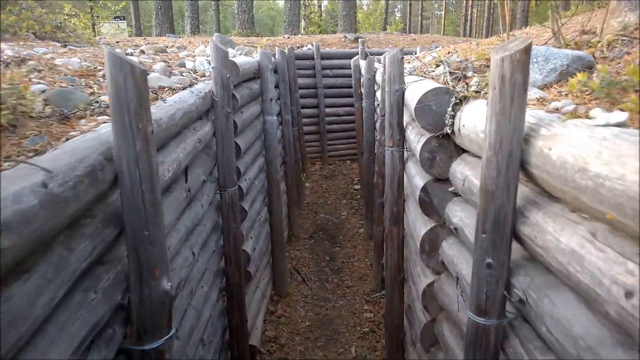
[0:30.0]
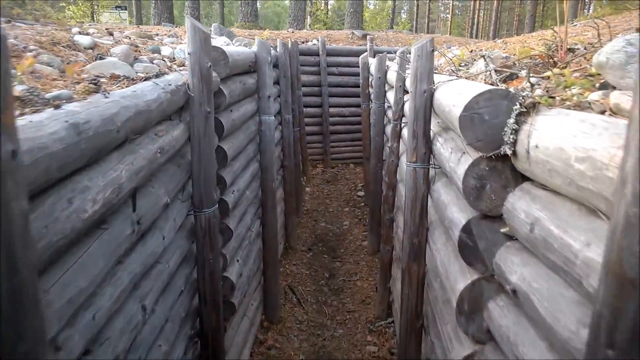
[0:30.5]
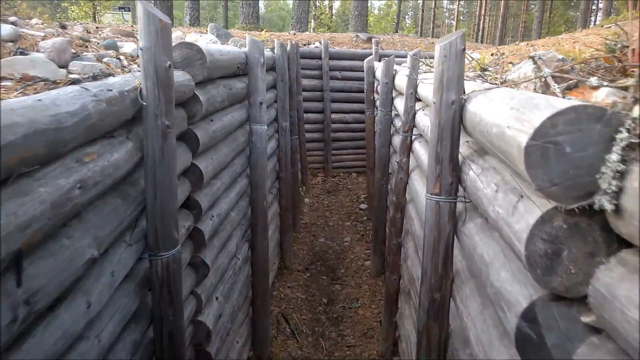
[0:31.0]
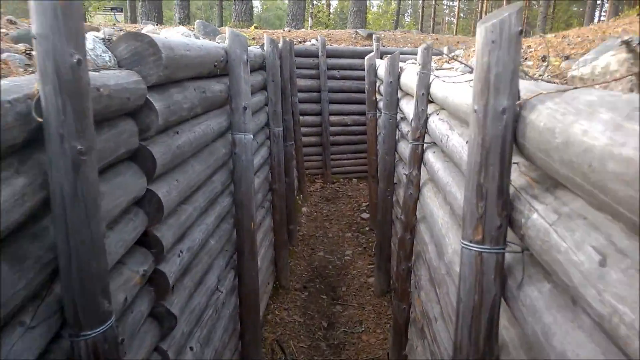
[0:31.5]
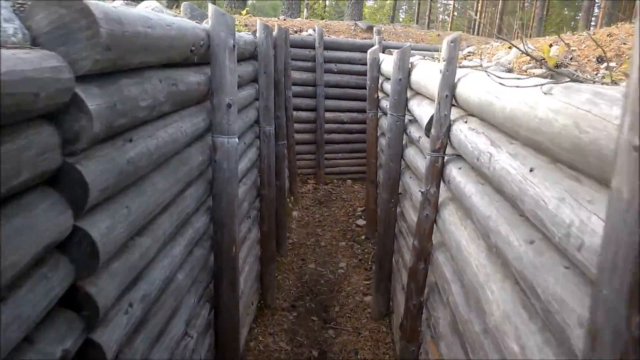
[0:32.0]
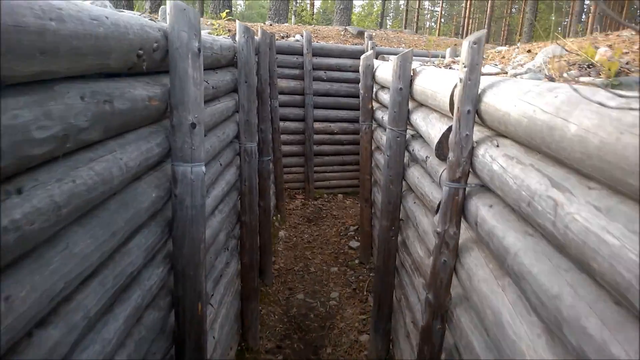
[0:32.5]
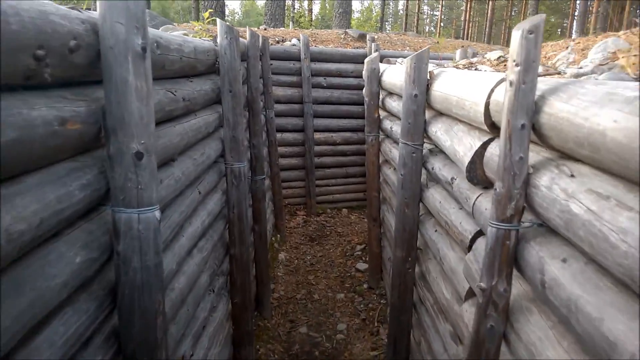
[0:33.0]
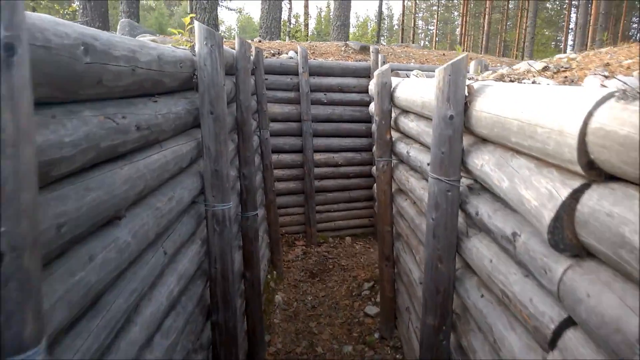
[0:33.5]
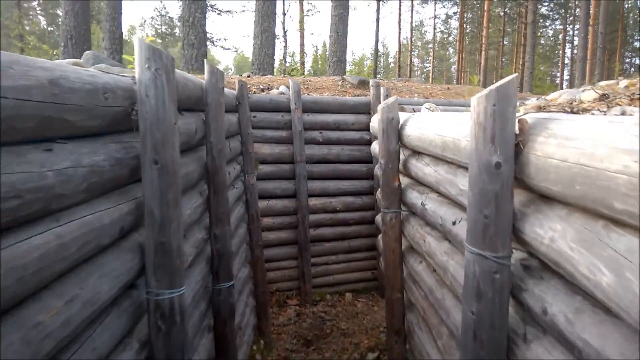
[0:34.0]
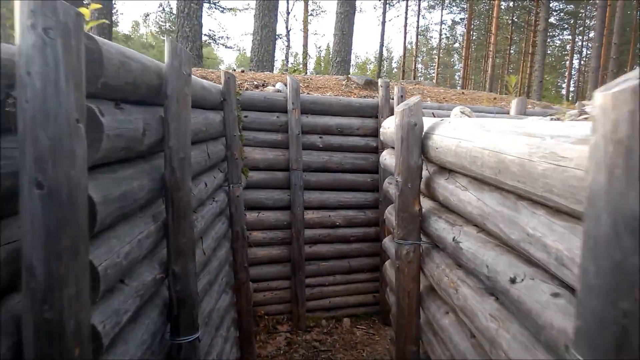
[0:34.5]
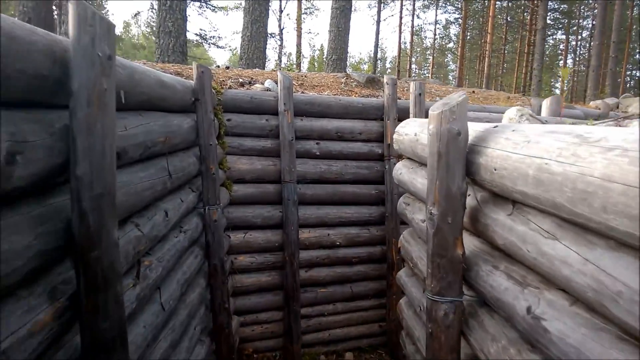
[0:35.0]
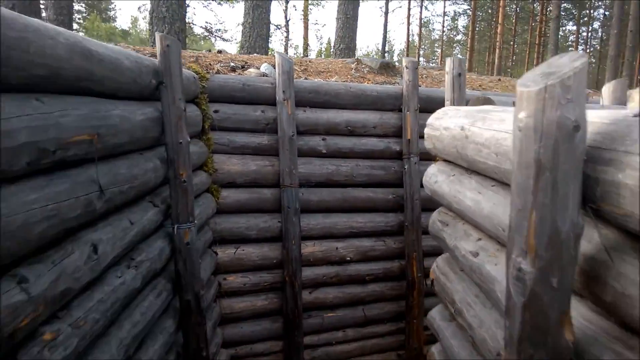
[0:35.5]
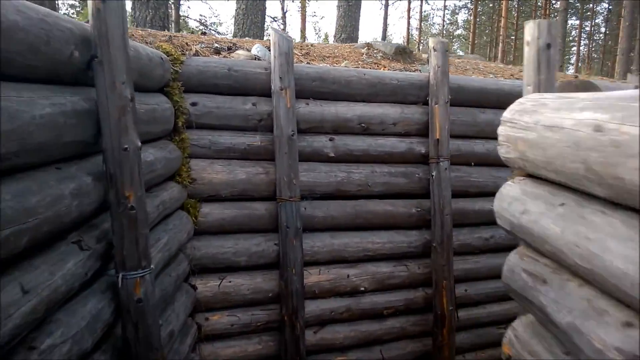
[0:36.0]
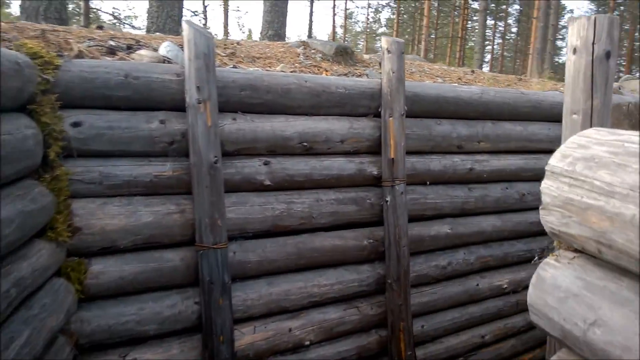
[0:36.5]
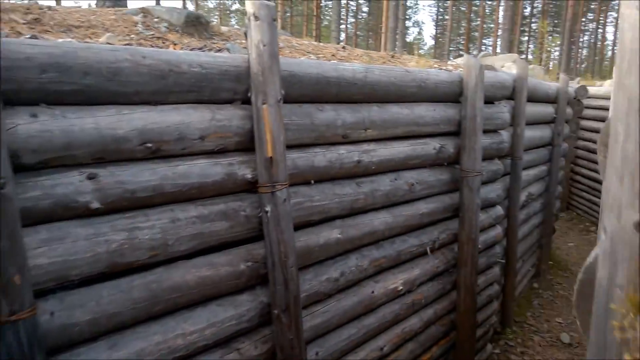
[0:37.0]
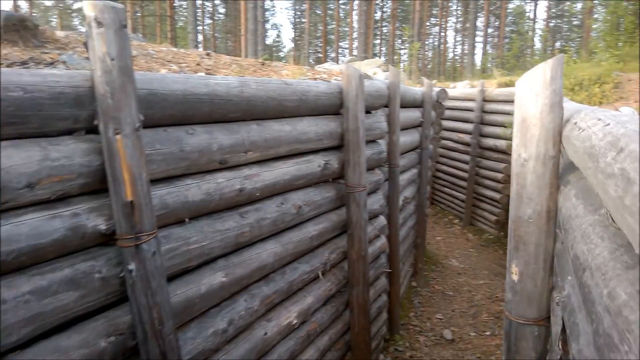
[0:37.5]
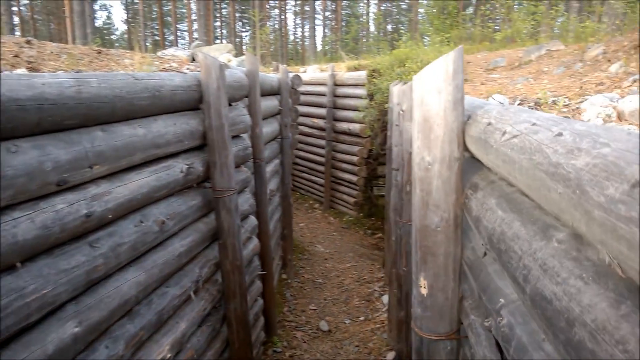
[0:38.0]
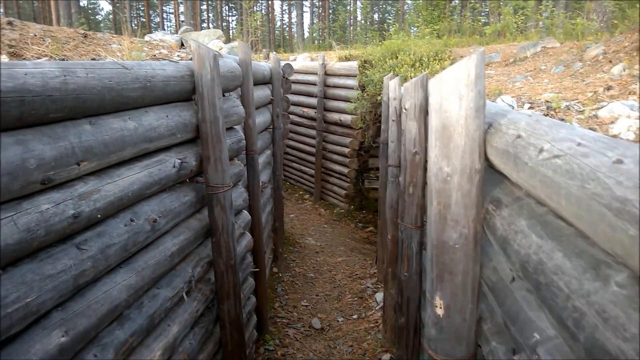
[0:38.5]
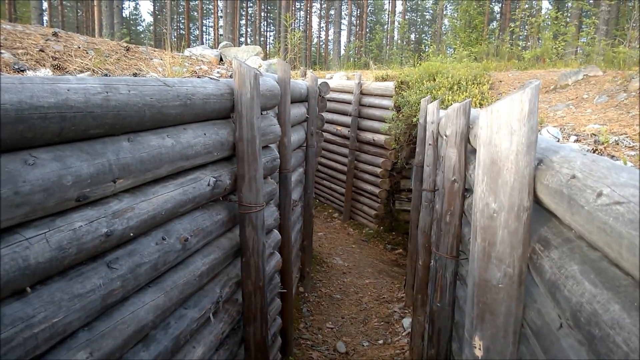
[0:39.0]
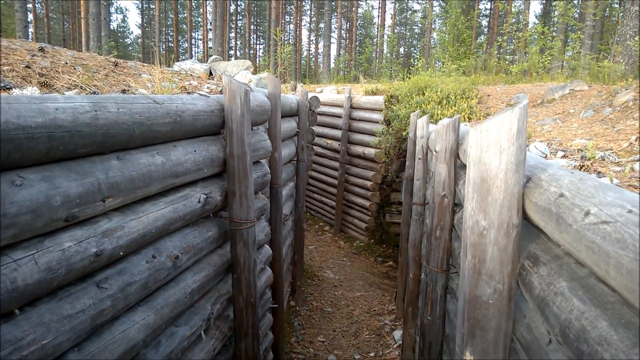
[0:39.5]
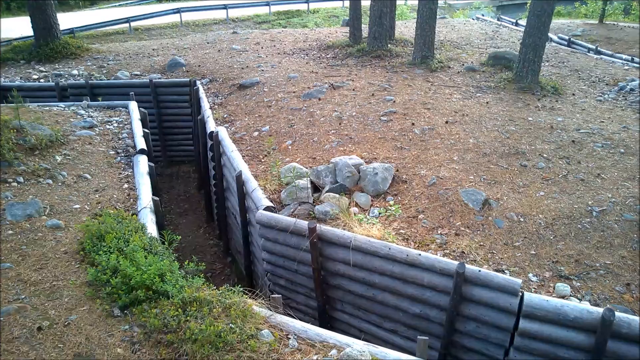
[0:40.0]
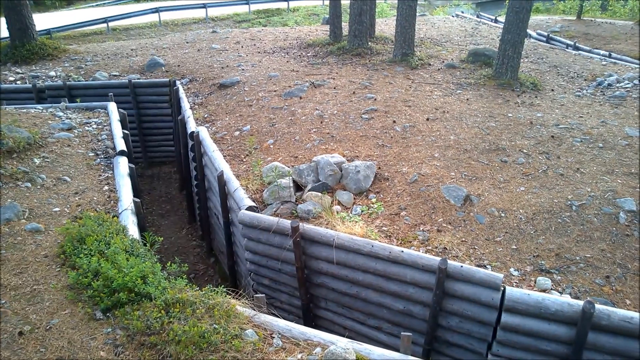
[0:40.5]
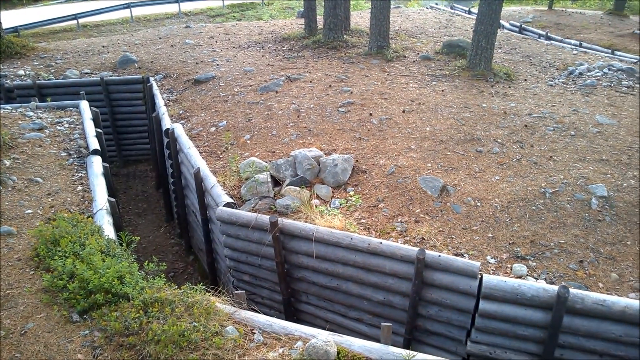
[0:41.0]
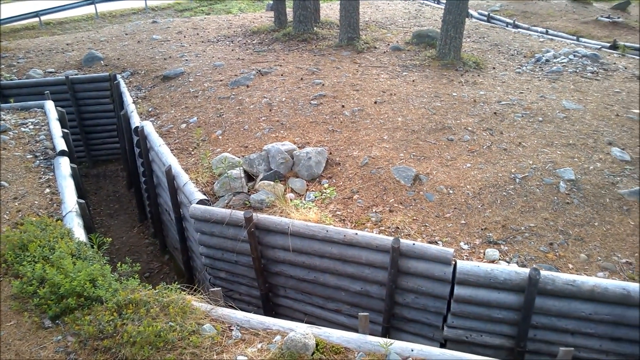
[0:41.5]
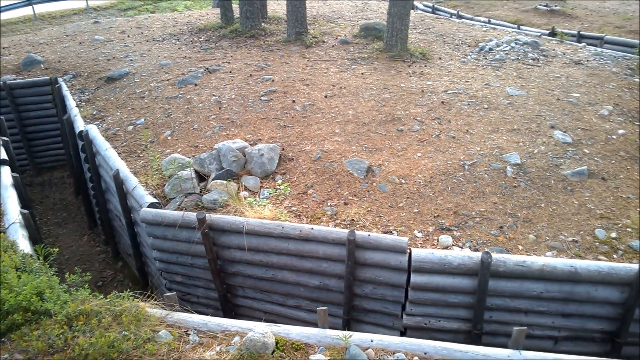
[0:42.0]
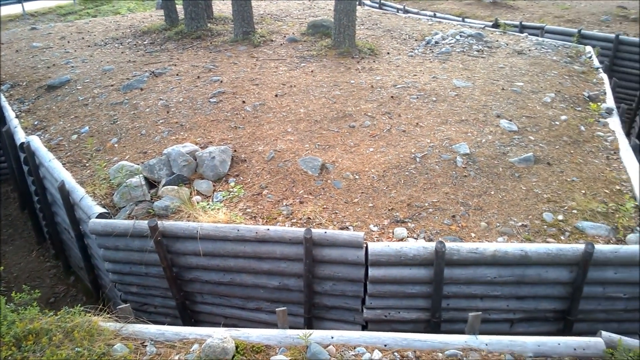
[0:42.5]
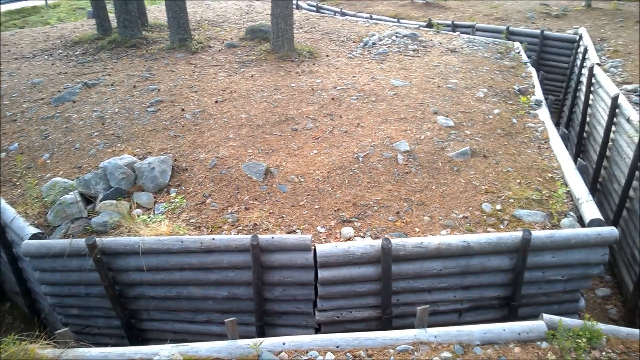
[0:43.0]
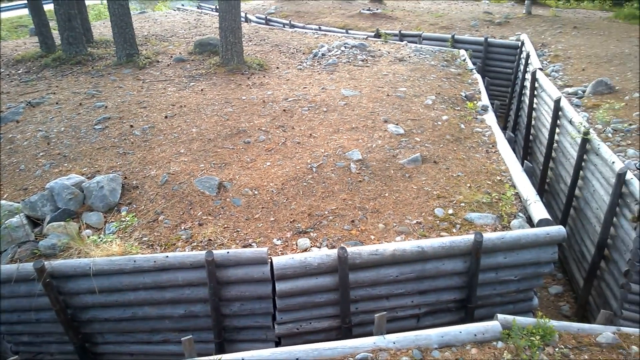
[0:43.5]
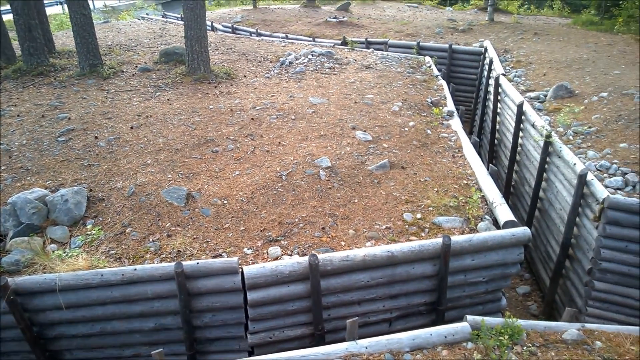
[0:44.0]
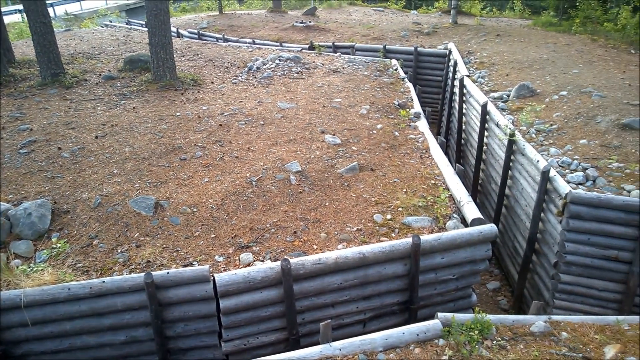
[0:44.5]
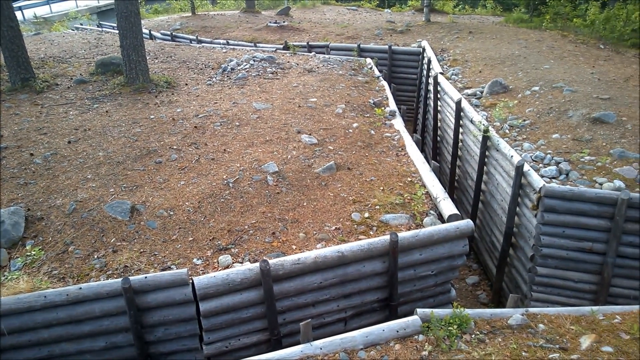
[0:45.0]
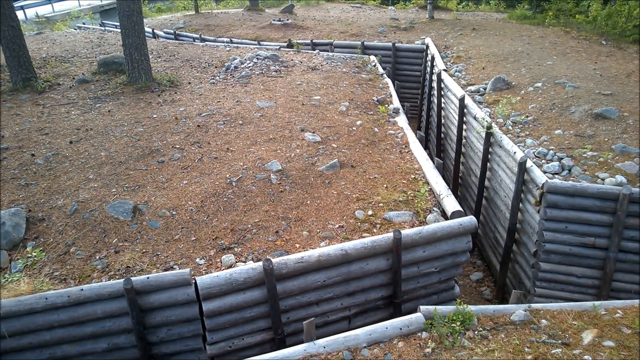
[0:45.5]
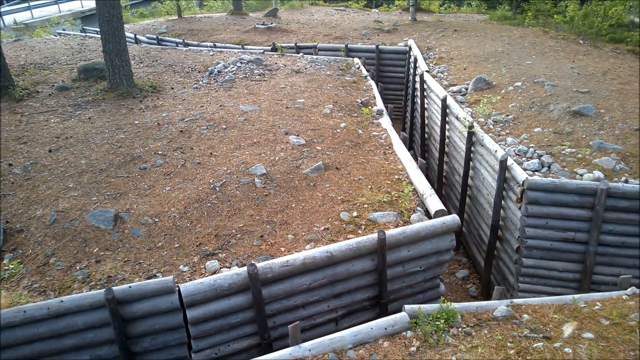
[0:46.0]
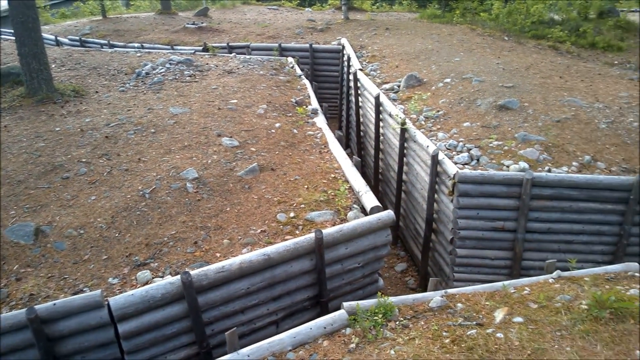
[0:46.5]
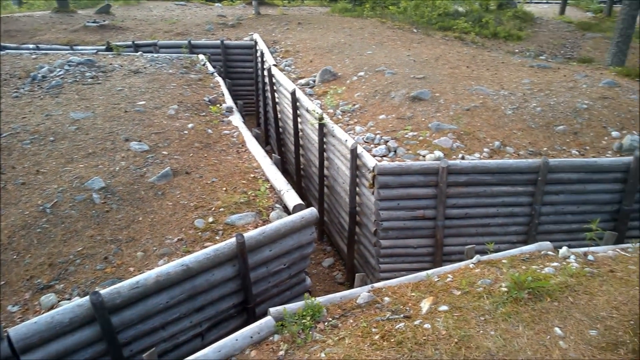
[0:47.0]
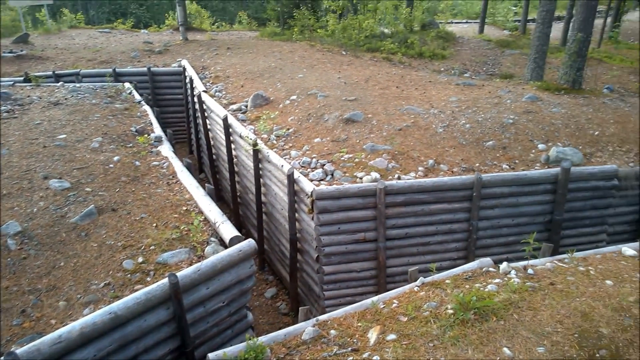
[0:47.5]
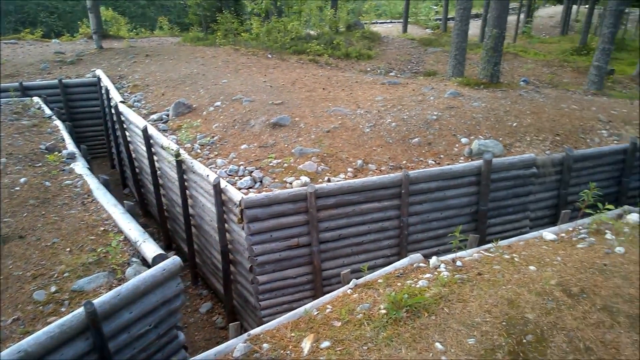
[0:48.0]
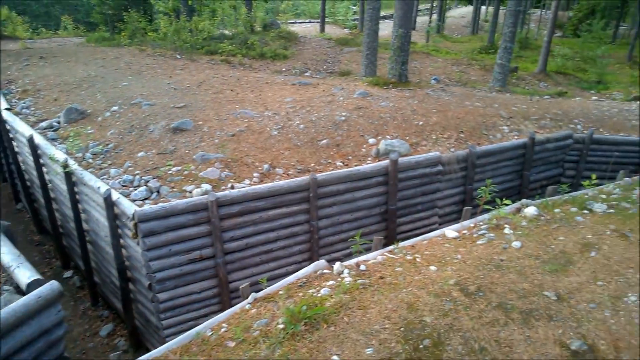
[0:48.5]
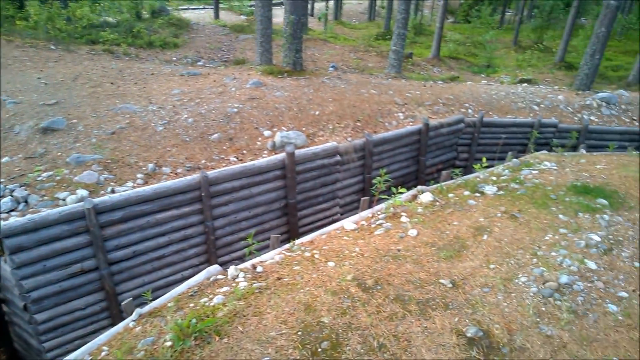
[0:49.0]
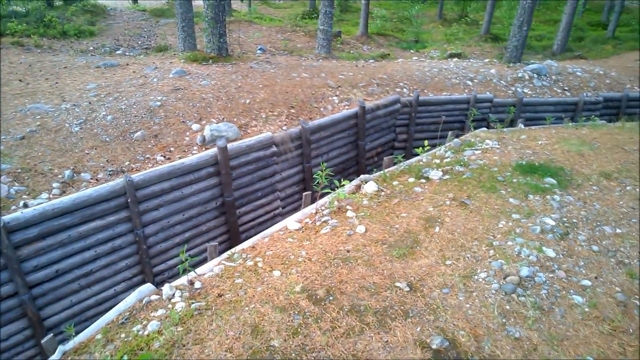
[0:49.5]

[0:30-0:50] The camera continues along the trench, which is dug decently deep into the ground and reinforced by a wood log structure: logs laid horizontally along the edge of the trench, held in place by vertical logs. The trench is quite narrow, fitting one person walking through it normally, though two people could possibly squeeze past each other by angling their bodies. The scene then cuts to a different perspective, looking down into the trench from outside it. The trench is decently long and has multiple paths leading to different areas within it; its full extent is unclear.